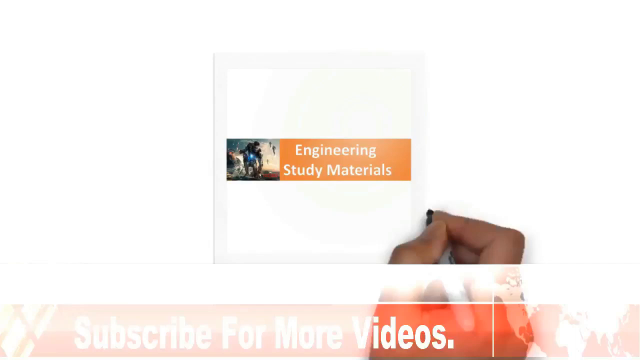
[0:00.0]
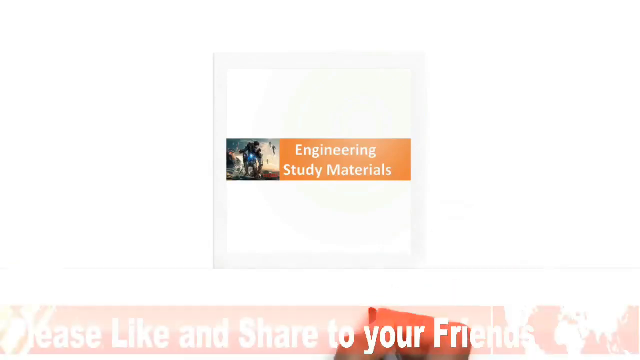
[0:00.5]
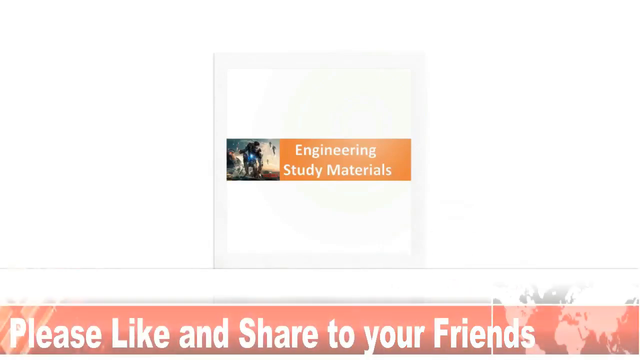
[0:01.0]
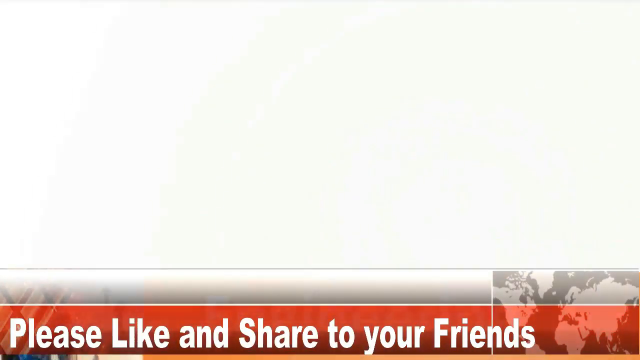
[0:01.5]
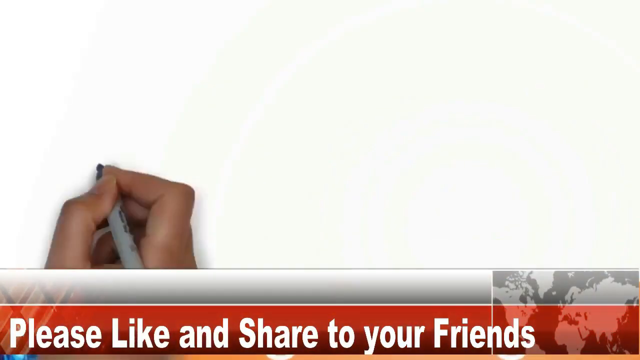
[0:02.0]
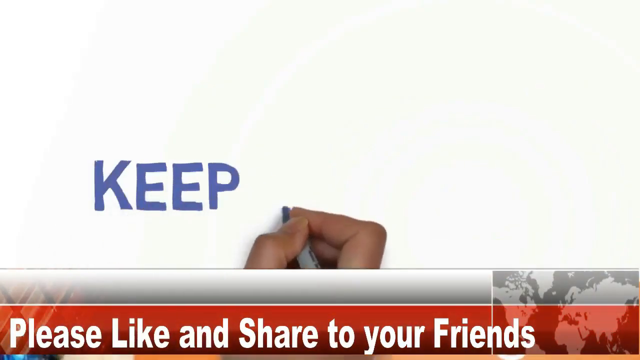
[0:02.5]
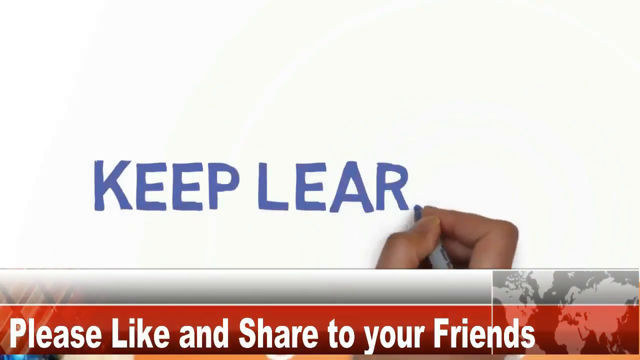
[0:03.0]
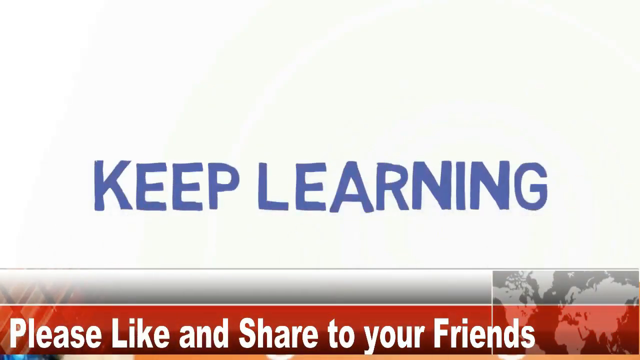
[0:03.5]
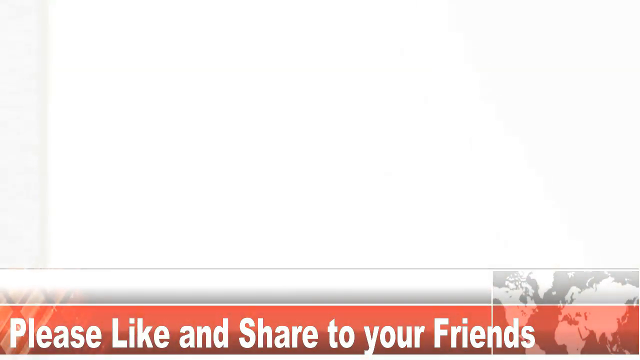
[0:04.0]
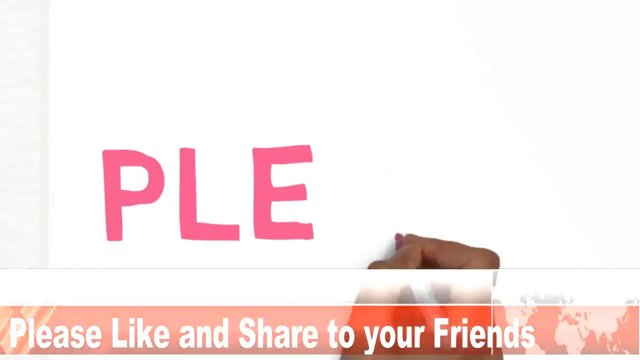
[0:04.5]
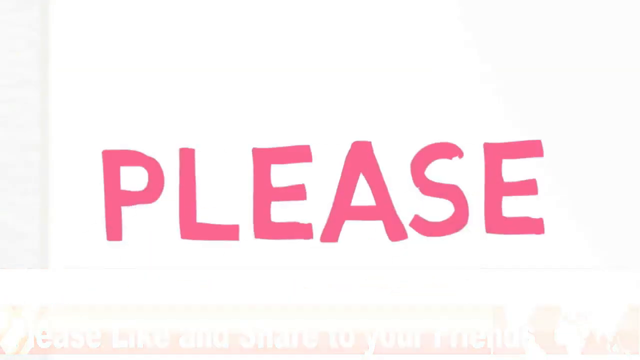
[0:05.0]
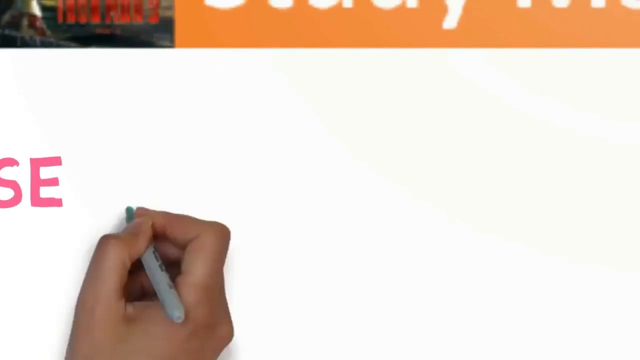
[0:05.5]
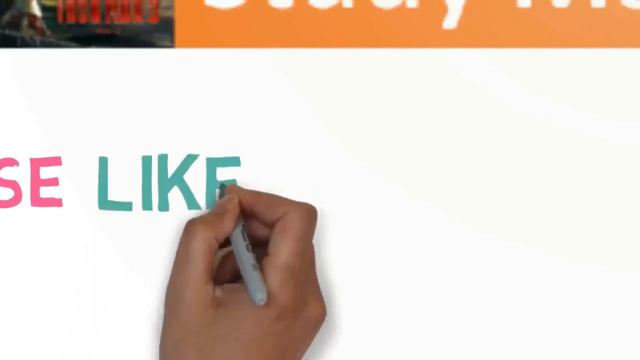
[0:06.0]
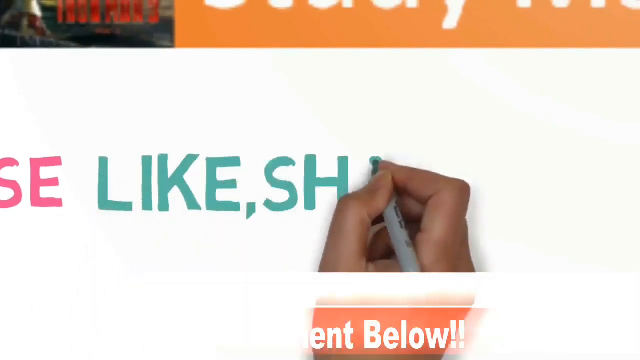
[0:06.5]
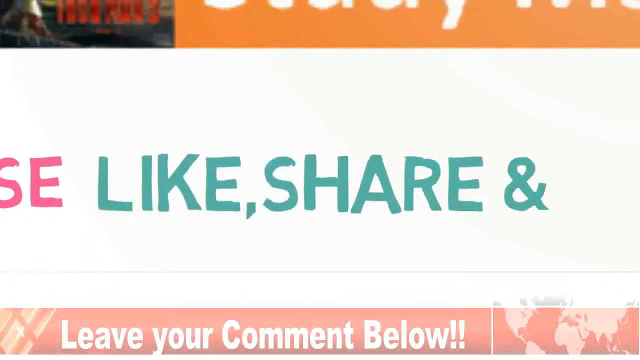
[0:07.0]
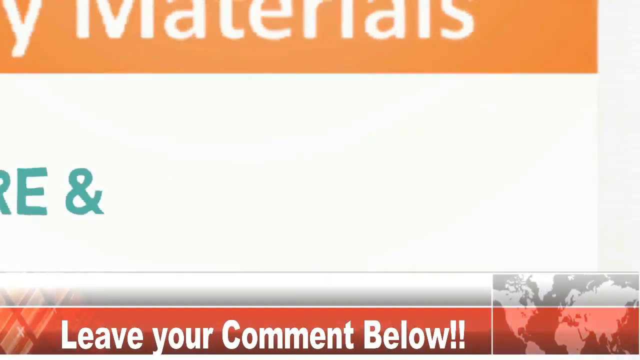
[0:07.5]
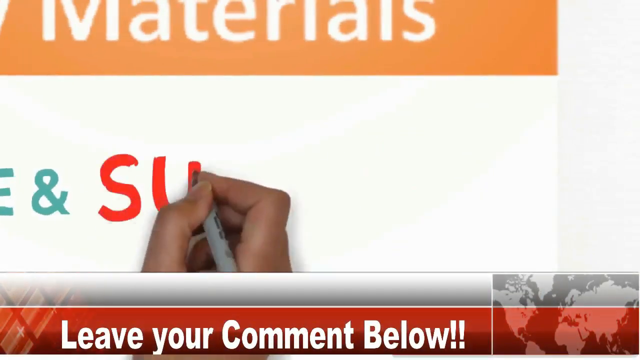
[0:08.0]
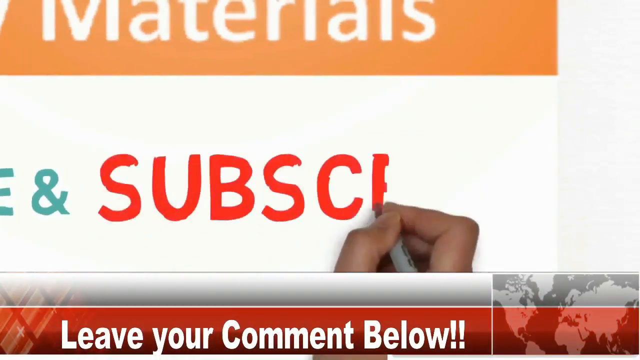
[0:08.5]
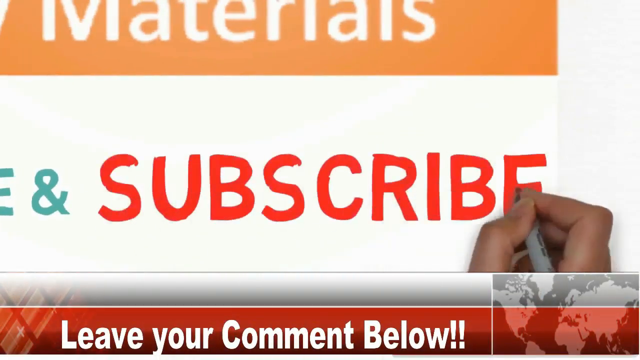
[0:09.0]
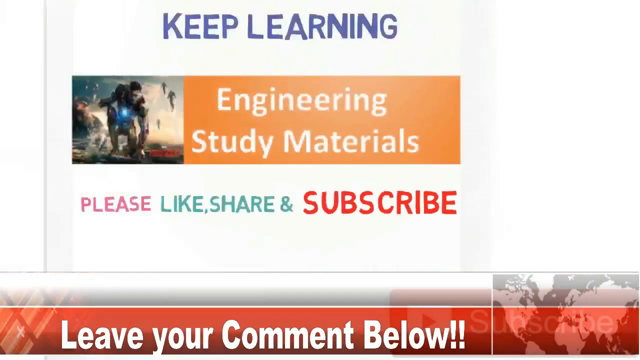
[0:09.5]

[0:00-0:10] The video opens with a brief introduction to an Engineering Study Material YouTube channel. The material is on a white paper with an orange lining on which "Engineering Study Material" is written, and the text "keep learning" and "please like share and subscribe" appears, asking viewers to like, share and subscribe to the channel for more material. It is done by handwriting on the wall.